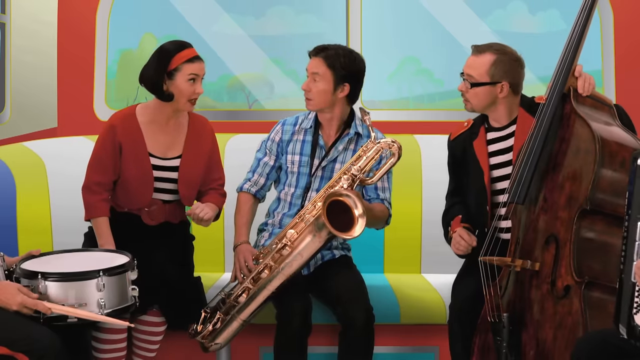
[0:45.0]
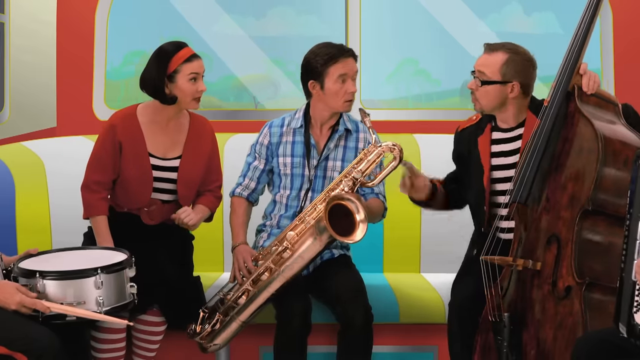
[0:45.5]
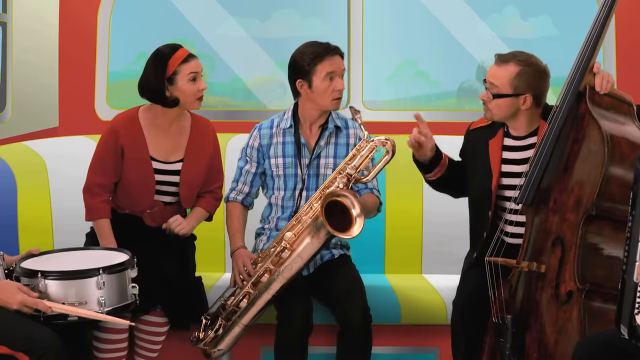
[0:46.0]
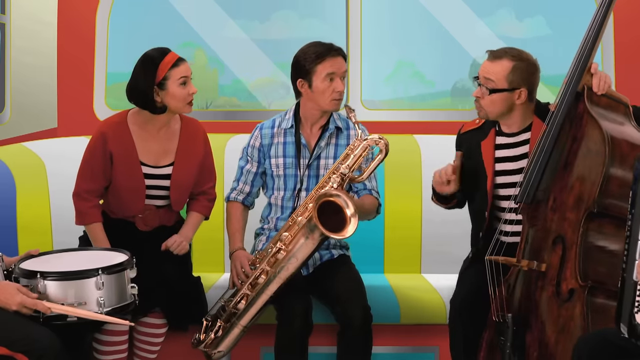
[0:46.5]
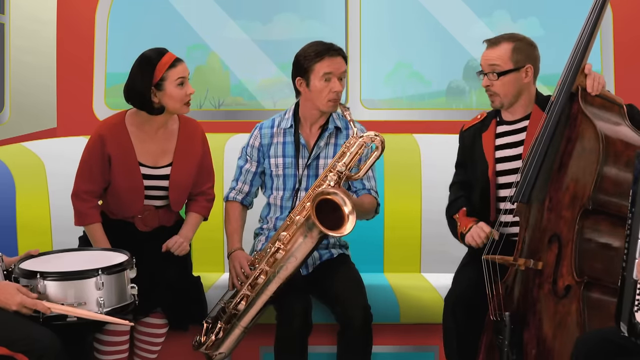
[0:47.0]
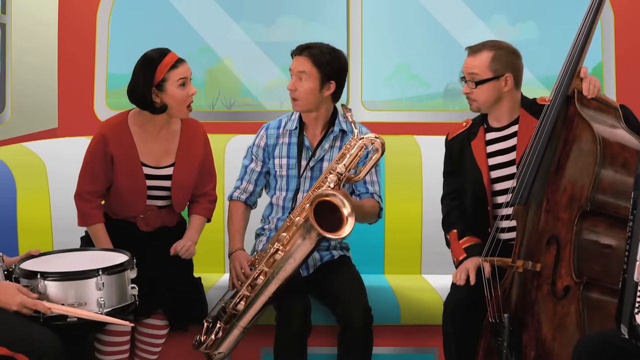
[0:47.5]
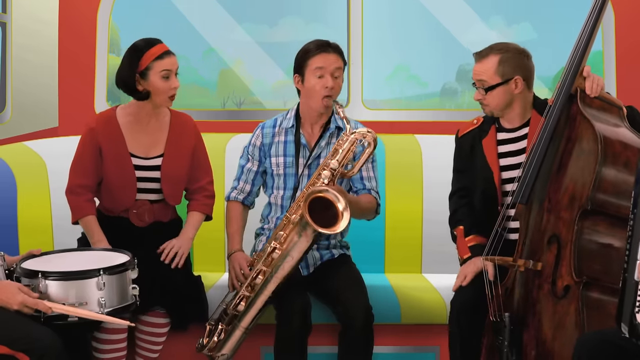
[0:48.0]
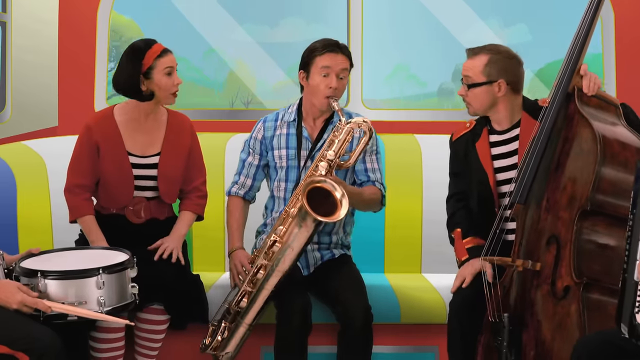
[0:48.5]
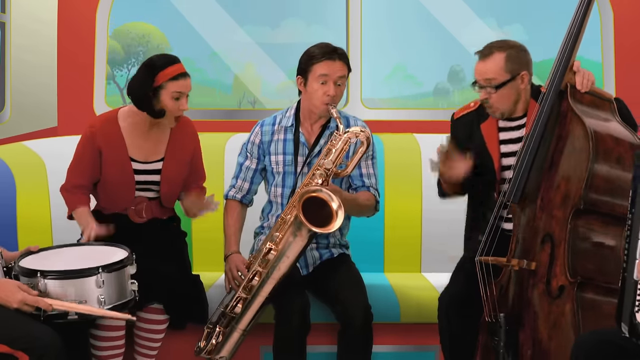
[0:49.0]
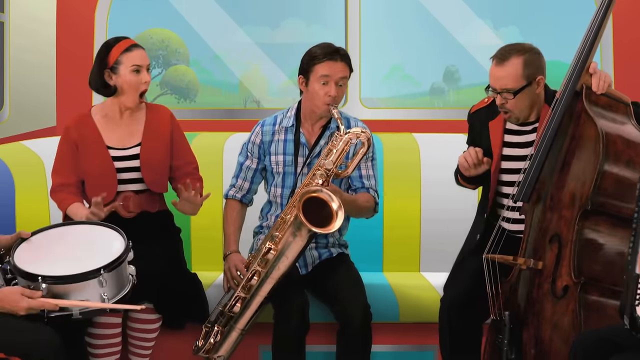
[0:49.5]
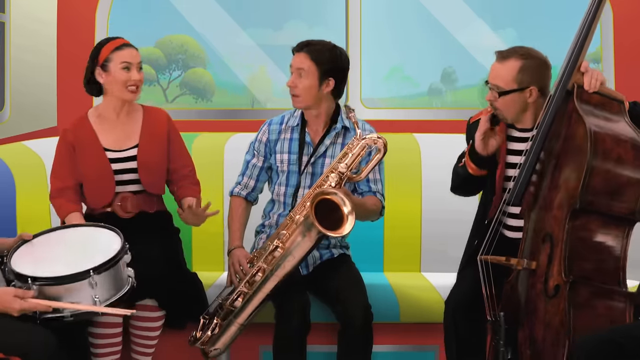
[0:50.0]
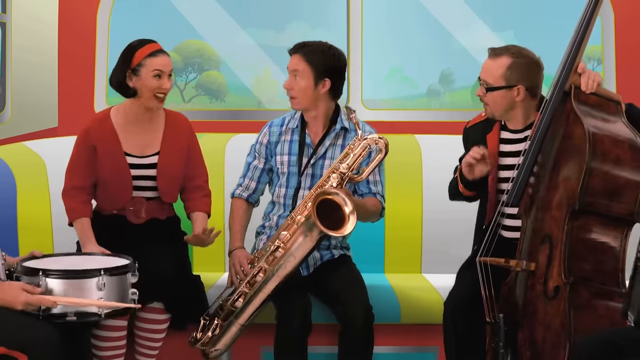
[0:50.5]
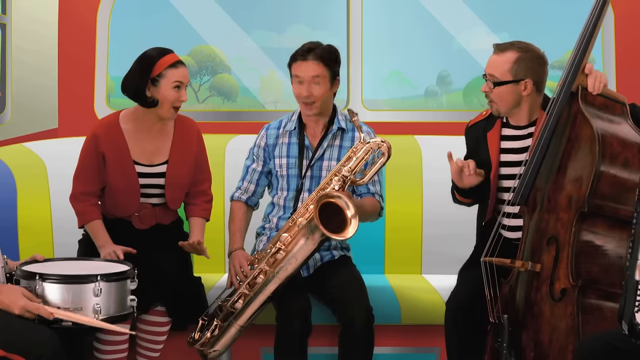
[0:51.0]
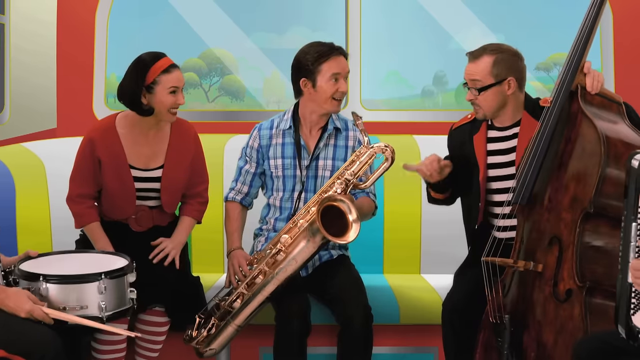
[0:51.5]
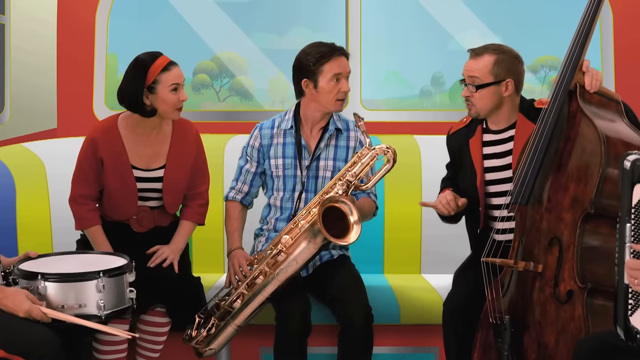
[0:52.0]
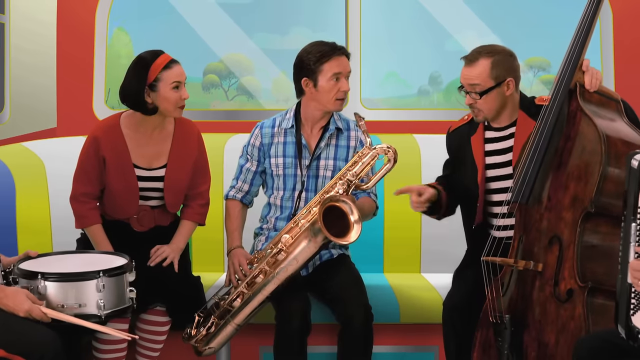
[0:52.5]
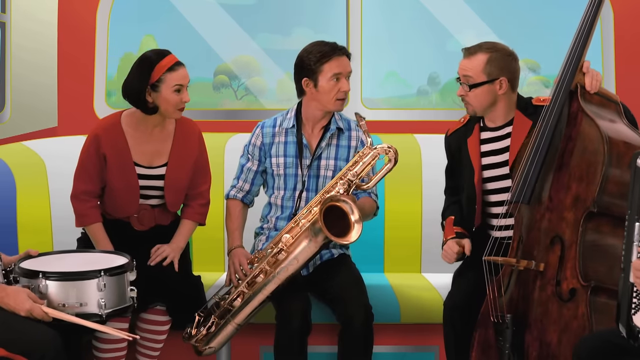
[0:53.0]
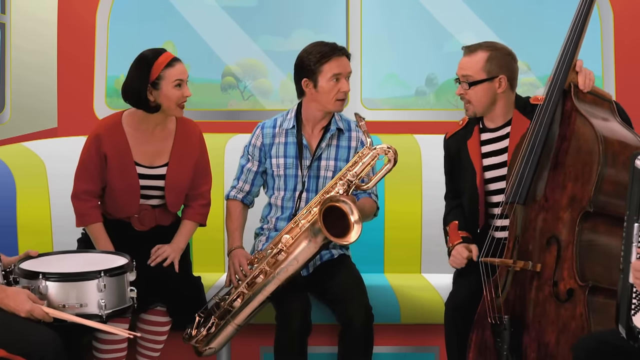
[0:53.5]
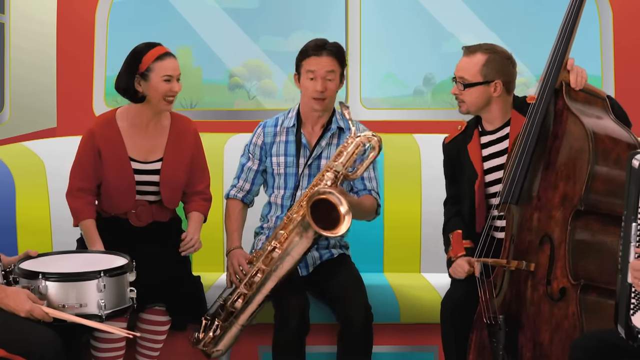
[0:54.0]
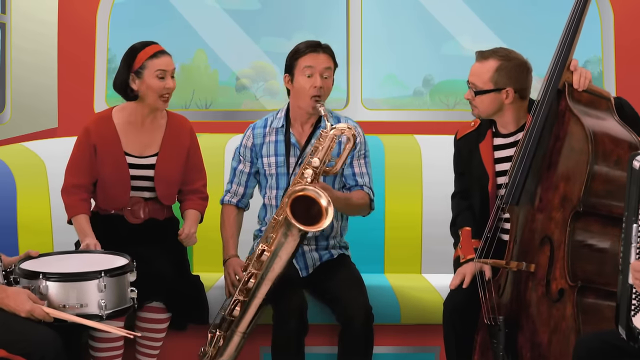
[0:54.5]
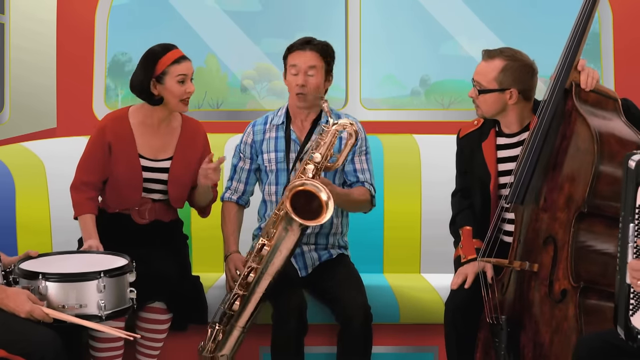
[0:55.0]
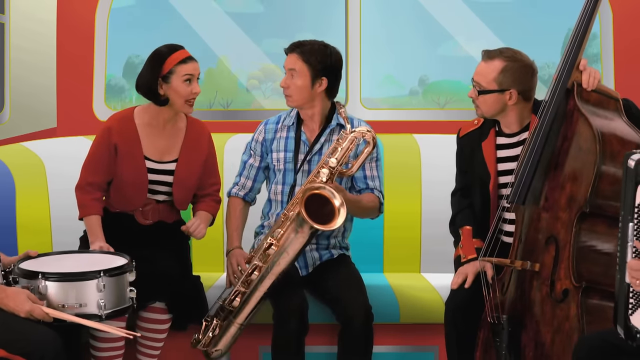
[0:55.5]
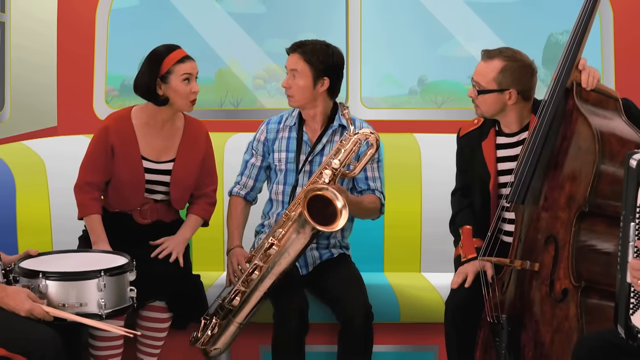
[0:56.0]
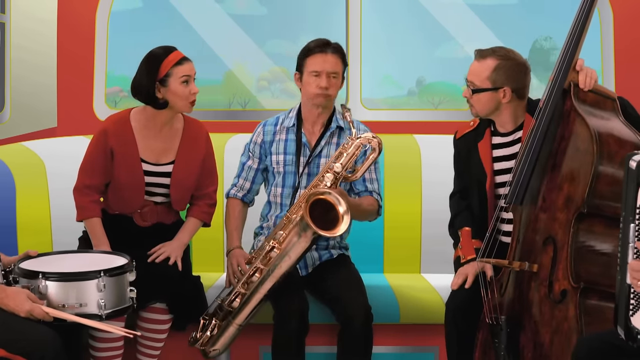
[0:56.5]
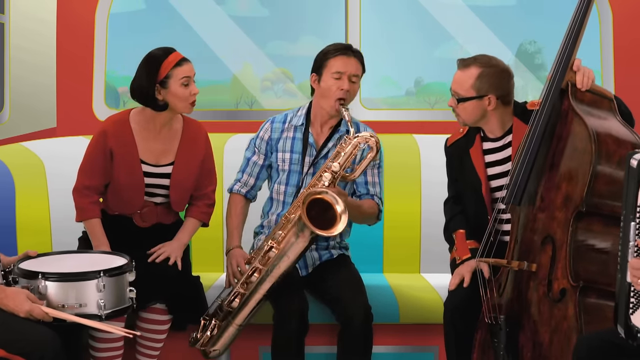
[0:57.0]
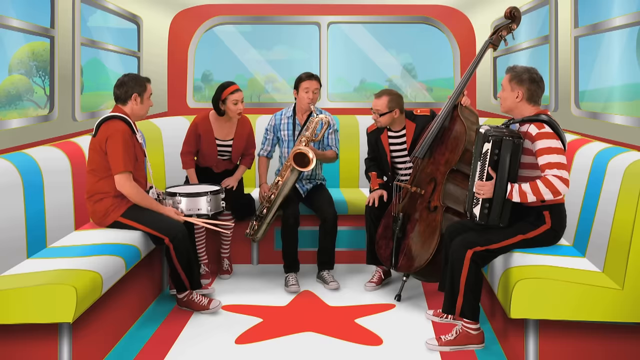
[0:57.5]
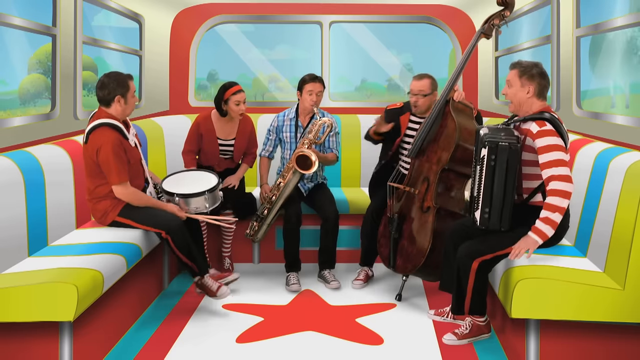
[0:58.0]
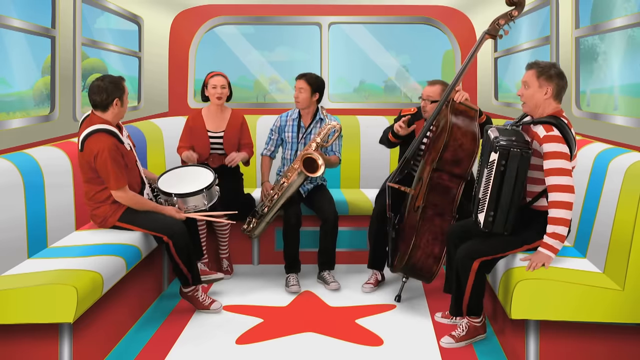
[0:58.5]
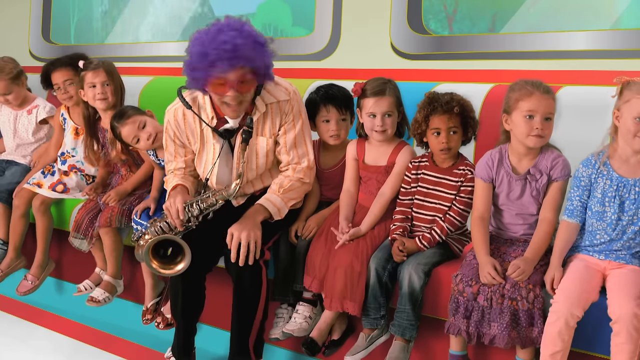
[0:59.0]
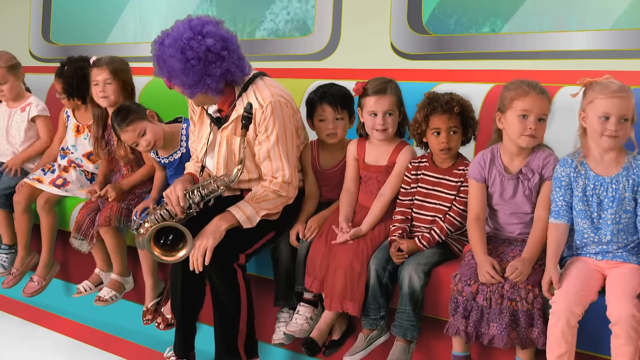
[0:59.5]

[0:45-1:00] The saxophone player in the blue shirt in the back finally gets his chance to play. He plays one note, and all of the band members kind of jump back, apparently surprised. The saxophone player with the purple fro and the children on the side are watching; they do not seem as surprised as the band members, and look maybe a little leery, neither too excited nor upset. The band members keep interrupting him, and he only gets one note out.